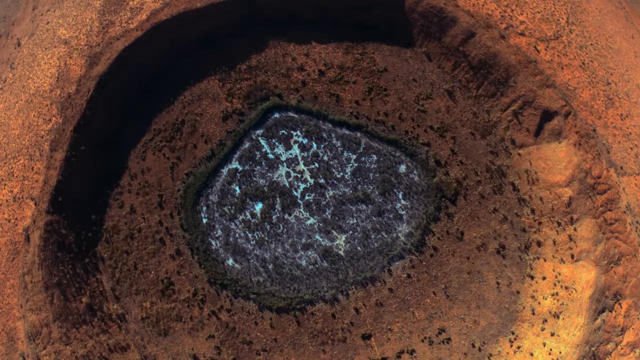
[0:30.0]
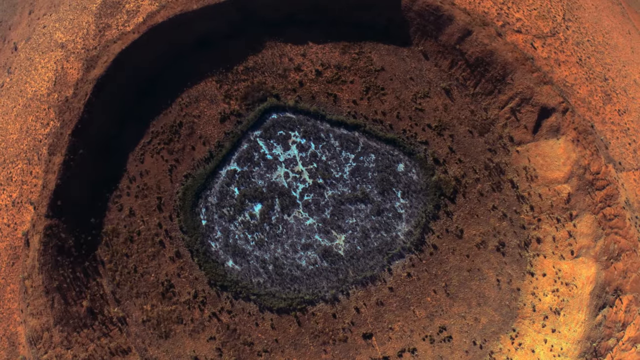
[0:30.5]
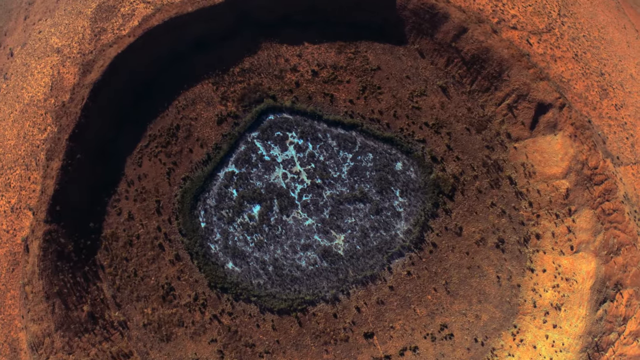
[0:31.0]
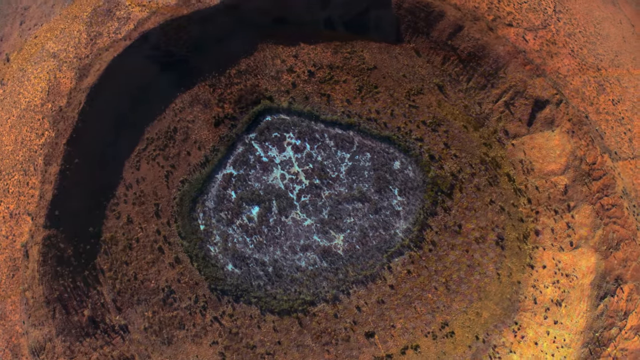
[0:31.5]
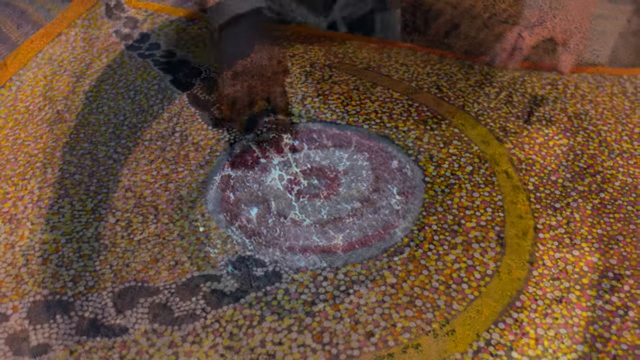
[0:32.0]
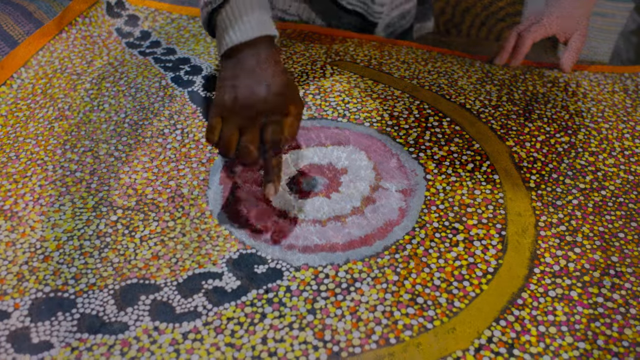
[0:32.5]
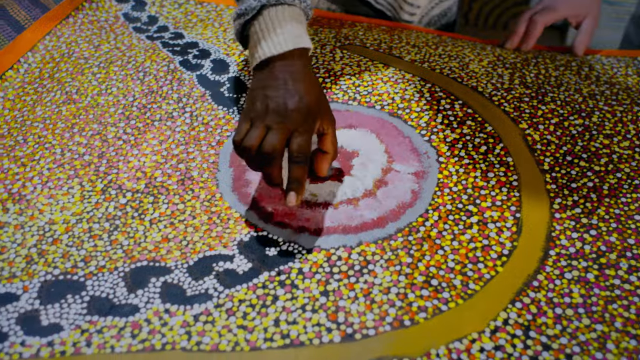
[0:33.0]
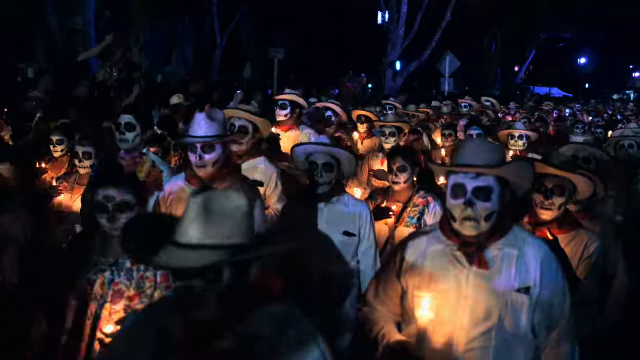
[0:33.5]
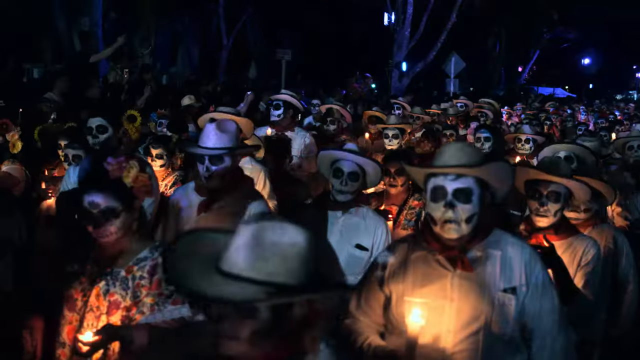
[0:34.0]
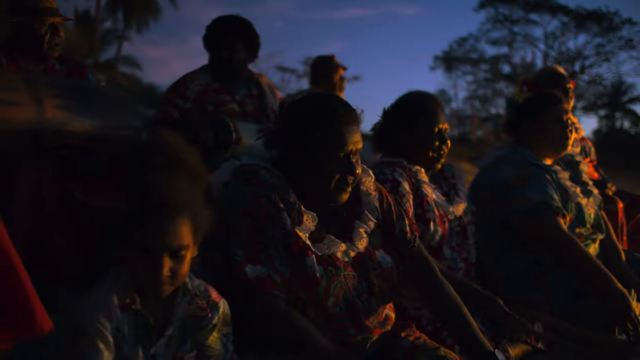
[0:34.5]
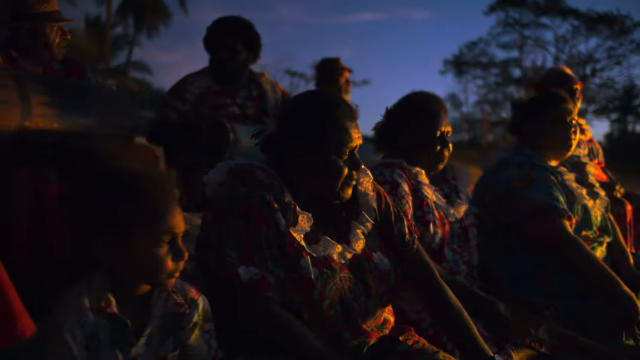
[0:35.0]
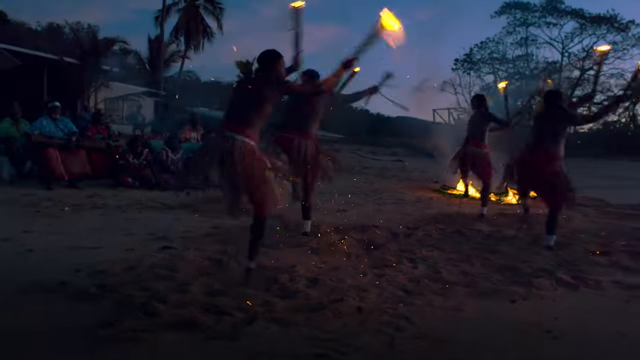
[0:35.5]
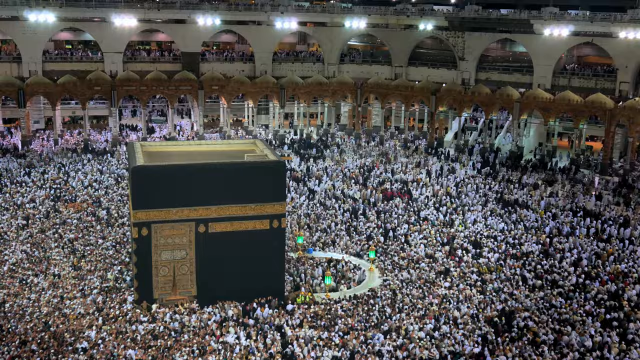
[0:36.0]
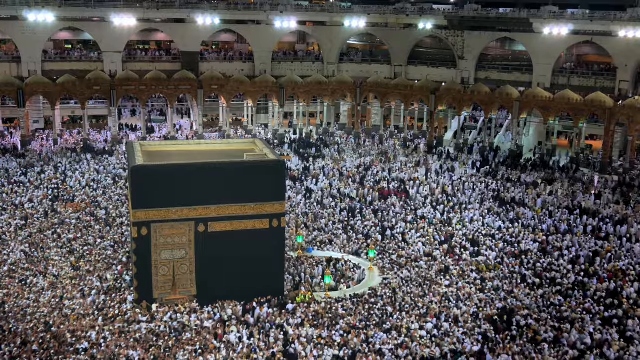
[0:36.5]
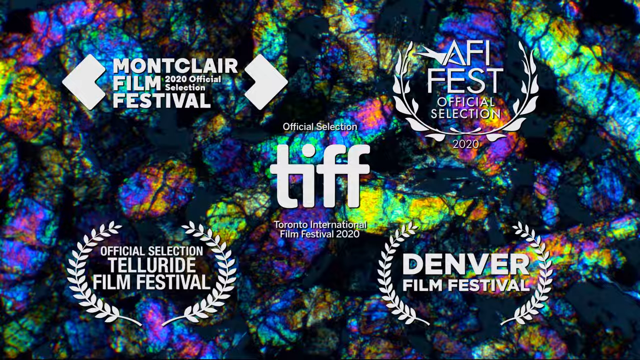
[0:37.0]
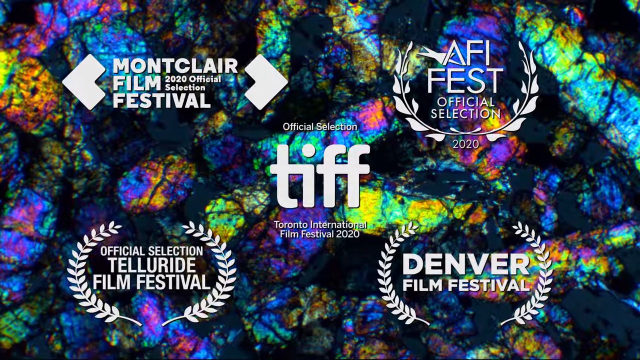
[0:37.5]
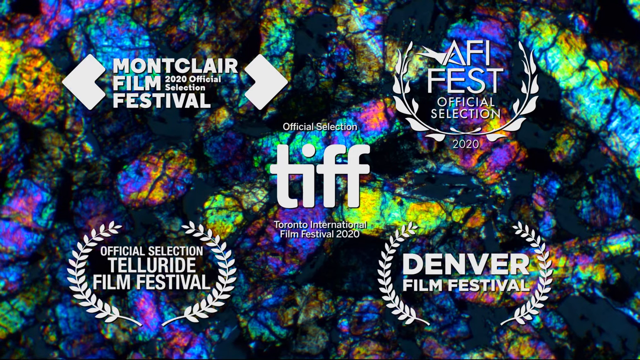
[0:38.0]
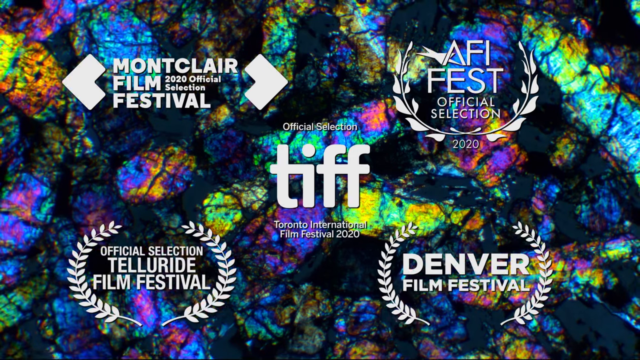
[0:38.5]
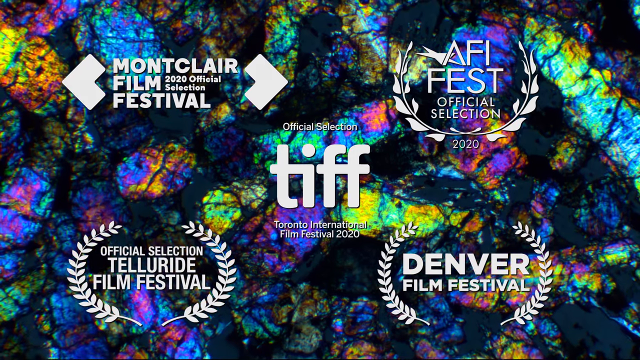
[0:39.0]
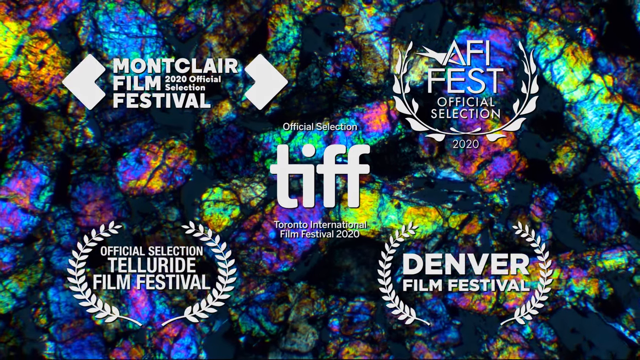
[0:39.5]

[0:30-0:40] The film is from Apple Original Films. A dark evening sky full of stars is shown, followed by a meteorite coming from the sky and hitting the ground in a desert. People in a lab observe stones found at the site, wearing gloves. People who look like they live in a forest appear. Next, a list of film festival selections is shown, including "Monteclair Film 2020 Official Selection Festival," "Afifest Official Selection 2020" and "Official Selection TIFF Toronto International Film Festival 2020." A plane then flies in the sky and looks classy.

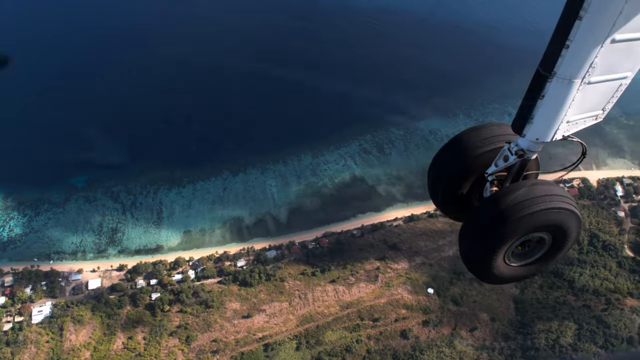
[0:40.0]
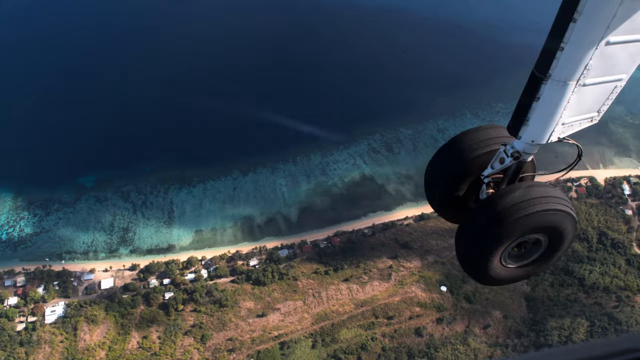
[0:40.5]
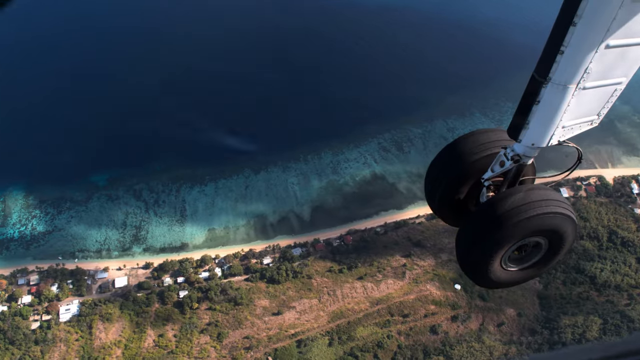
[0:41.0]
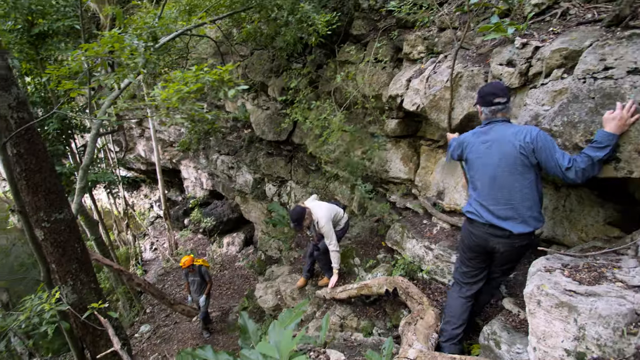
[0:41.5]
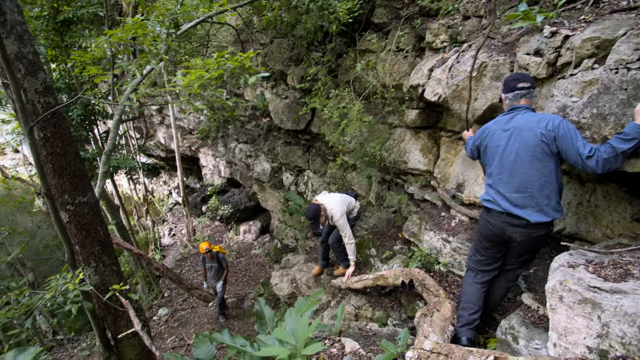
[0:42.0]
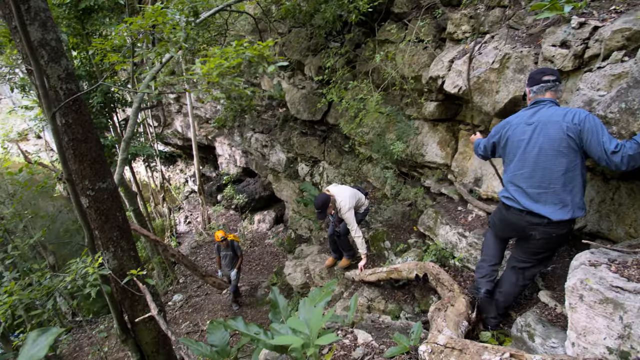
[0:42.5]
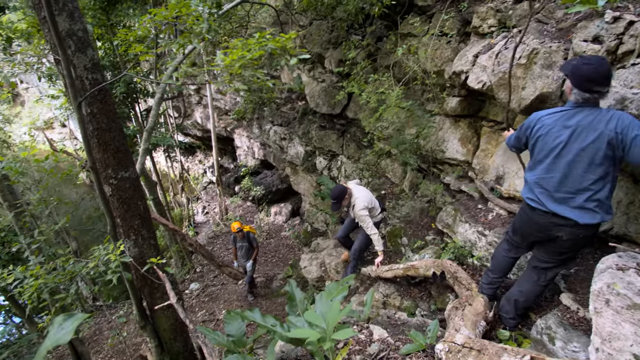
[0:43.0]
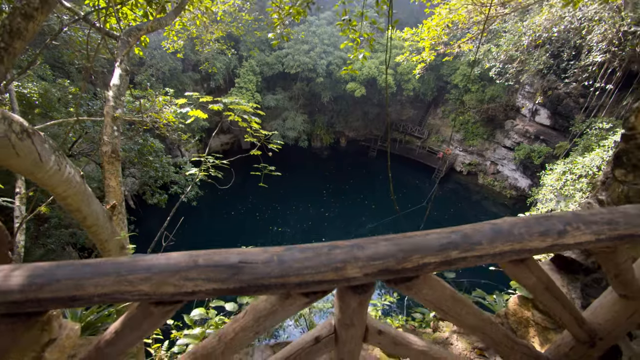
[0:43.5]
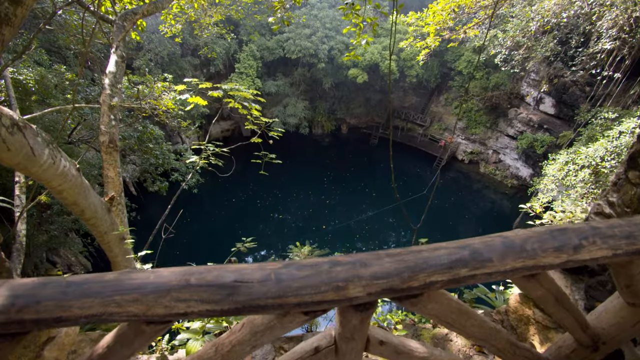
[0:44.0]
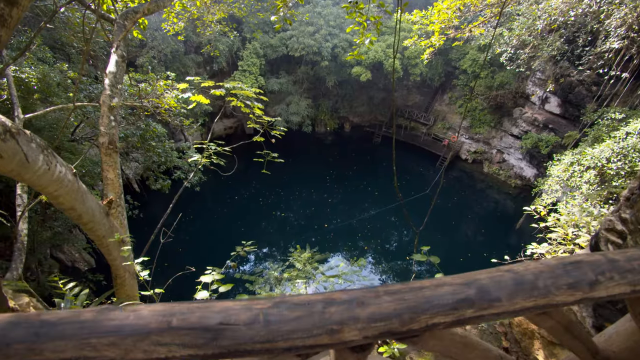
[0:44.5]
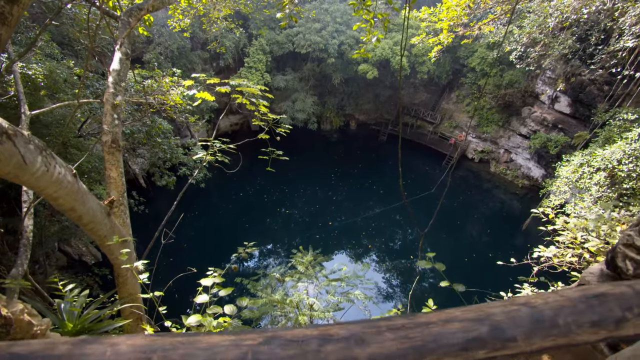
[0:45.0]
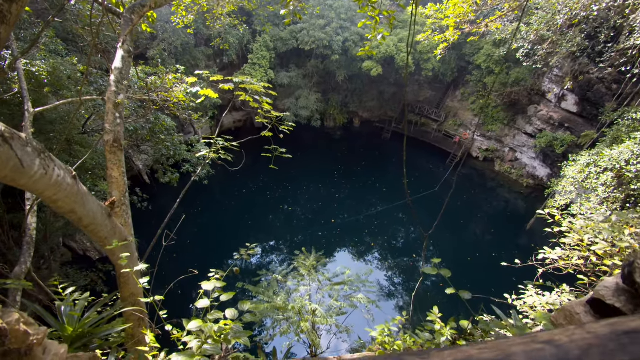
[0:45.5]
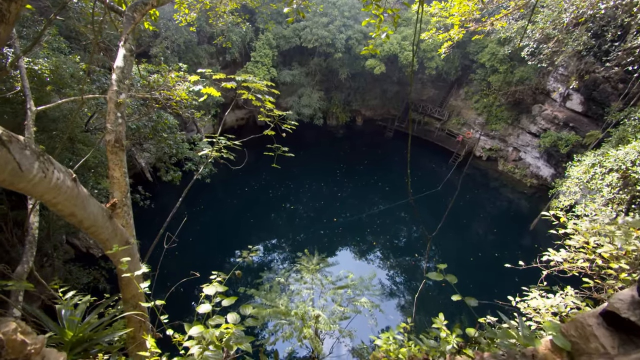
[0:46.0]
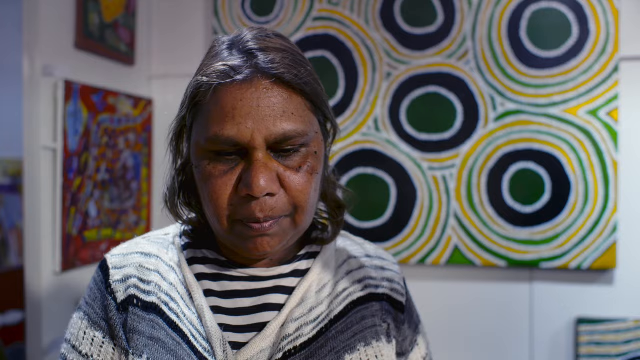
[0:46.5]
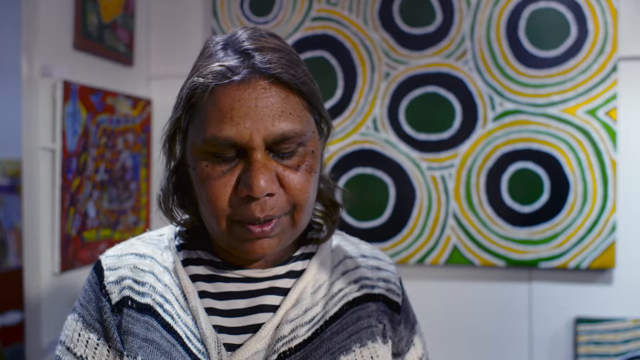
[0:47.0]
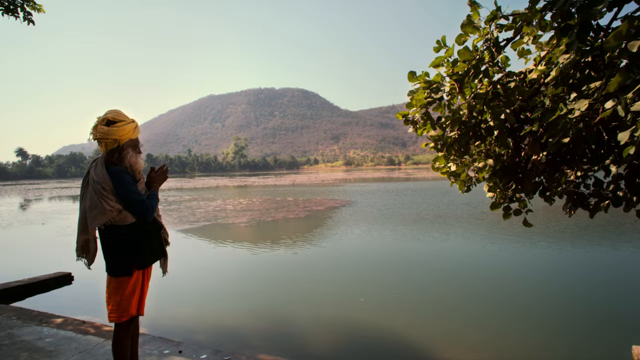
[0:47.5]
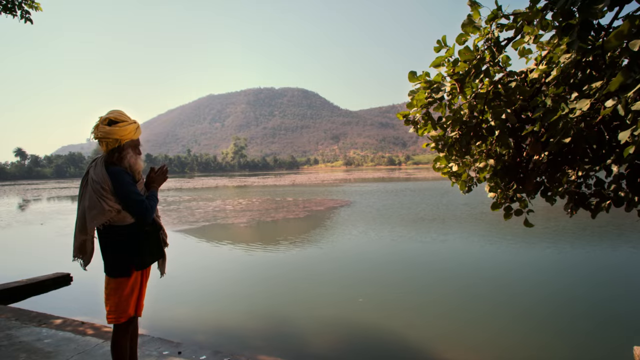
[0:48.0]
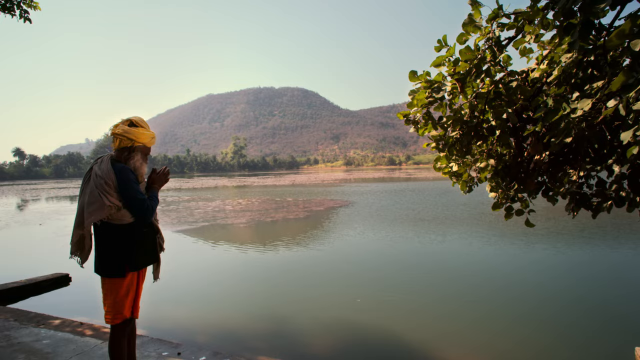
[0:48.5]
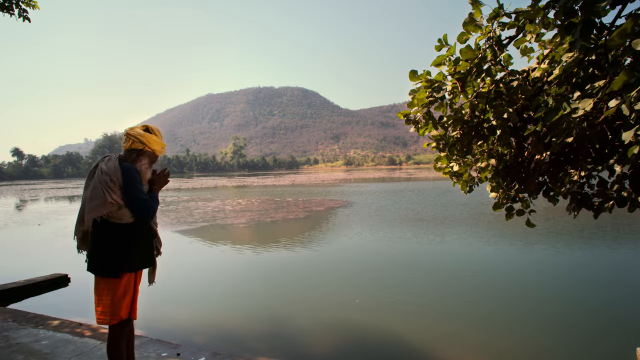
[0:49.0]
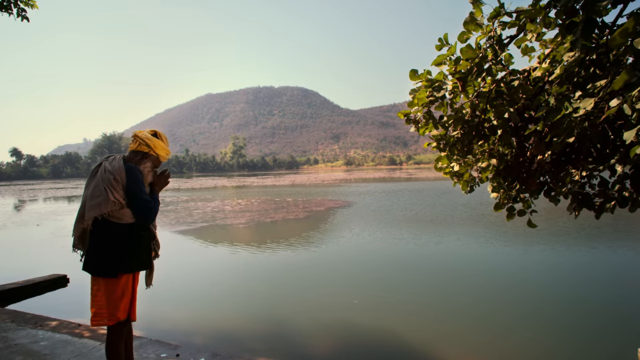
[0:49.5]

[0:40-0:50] People who look like Aboriginal people from Australia sit in groups, enjoying each other's company. An airplane flies above the coastline of a country. Next there is a huge pool of water where people are praying, among them a man with a white beard wearing yellow.